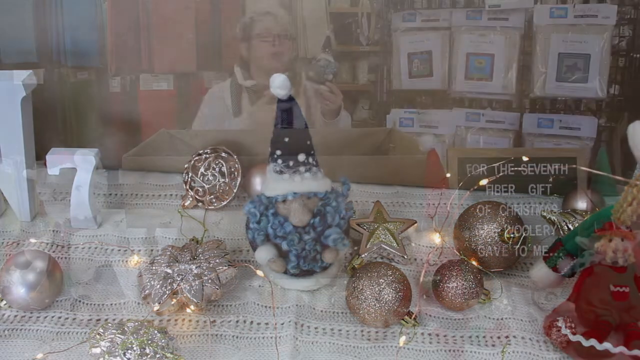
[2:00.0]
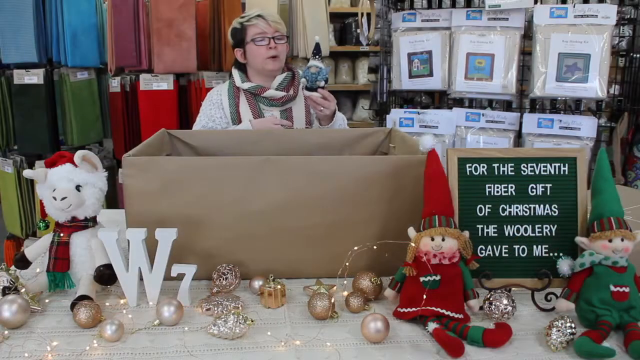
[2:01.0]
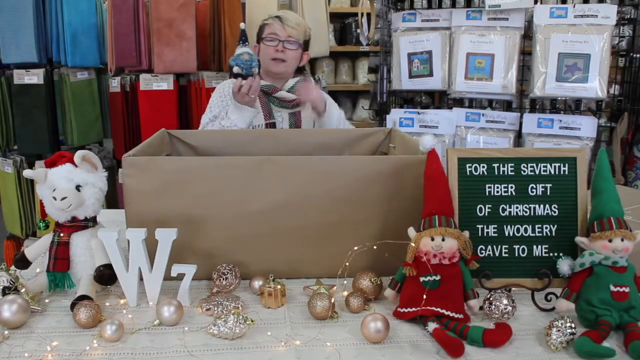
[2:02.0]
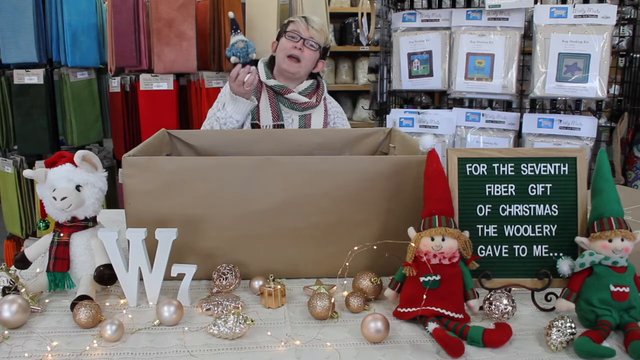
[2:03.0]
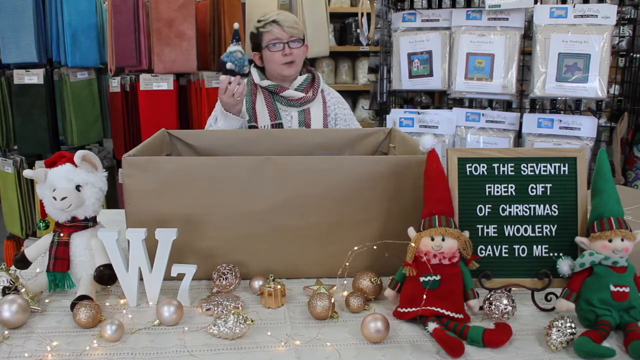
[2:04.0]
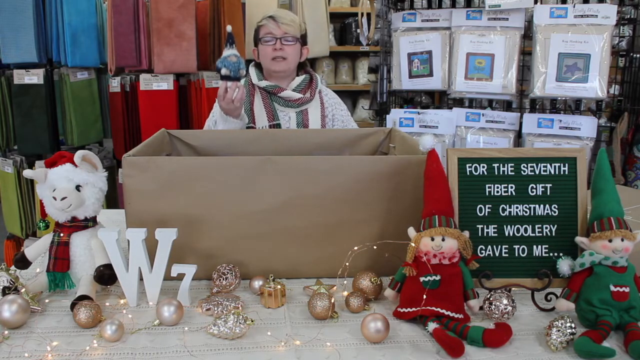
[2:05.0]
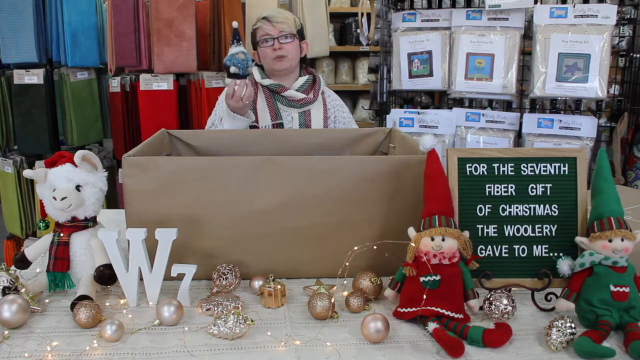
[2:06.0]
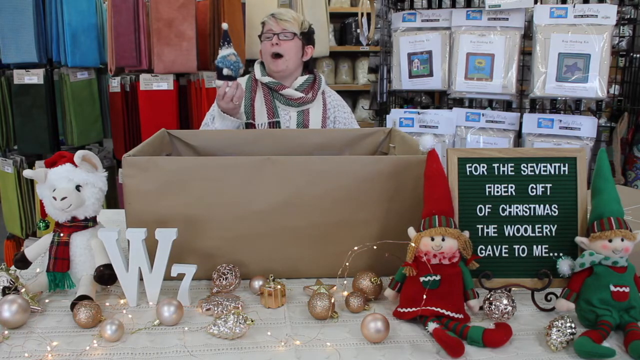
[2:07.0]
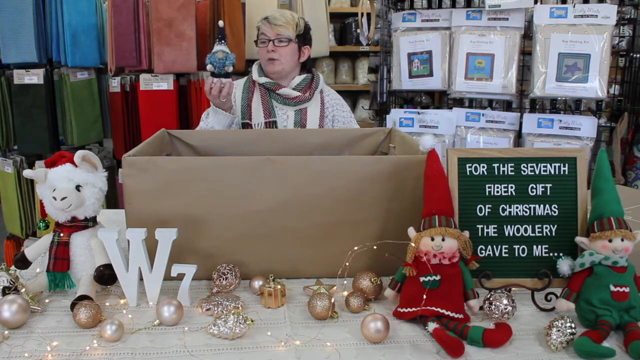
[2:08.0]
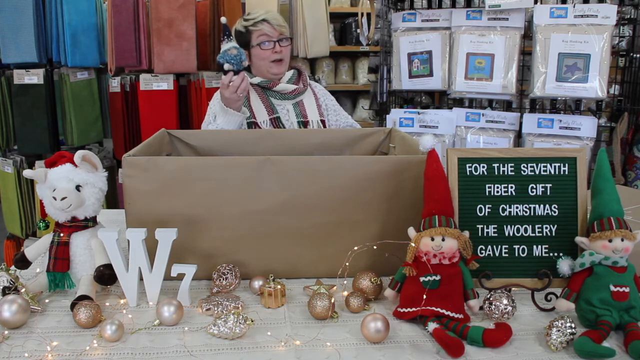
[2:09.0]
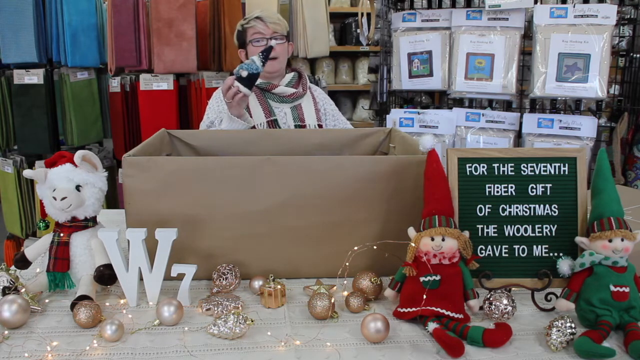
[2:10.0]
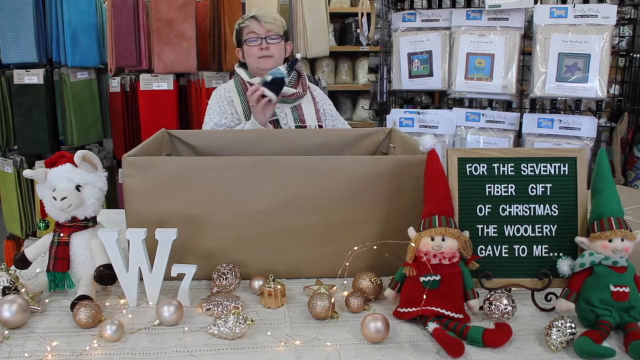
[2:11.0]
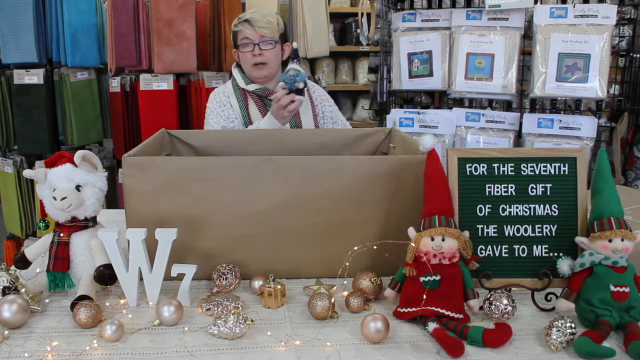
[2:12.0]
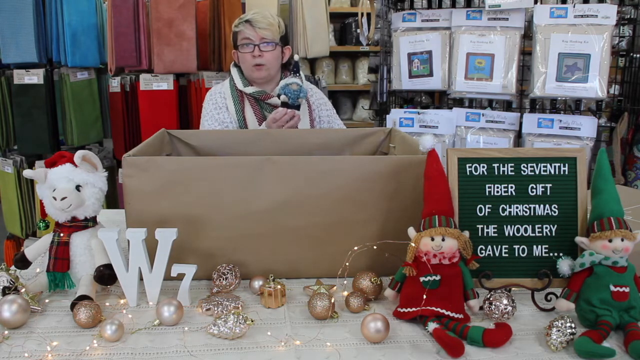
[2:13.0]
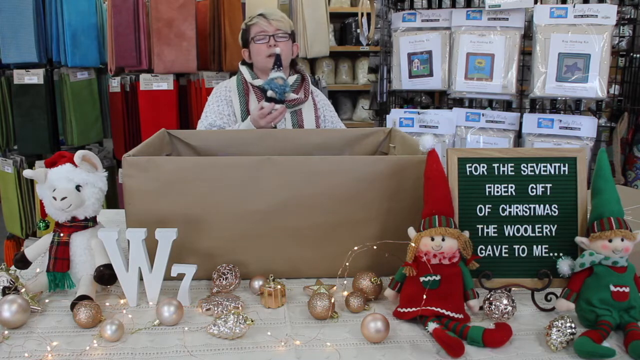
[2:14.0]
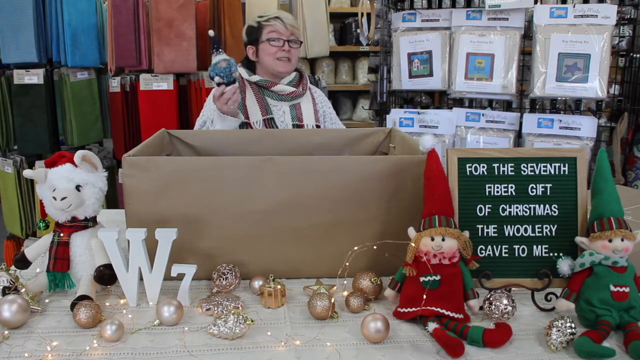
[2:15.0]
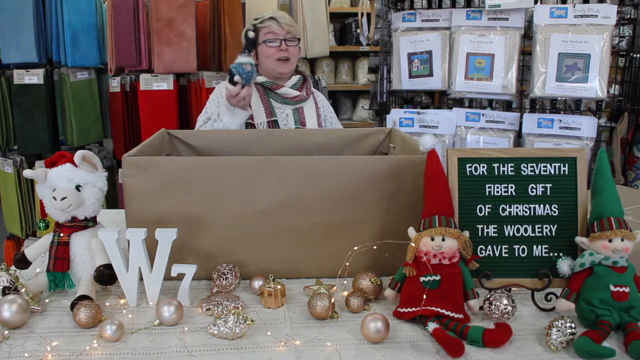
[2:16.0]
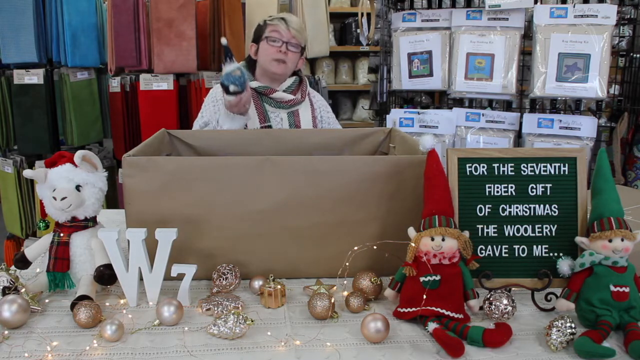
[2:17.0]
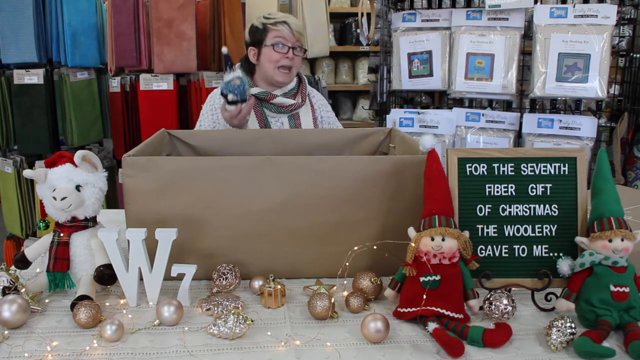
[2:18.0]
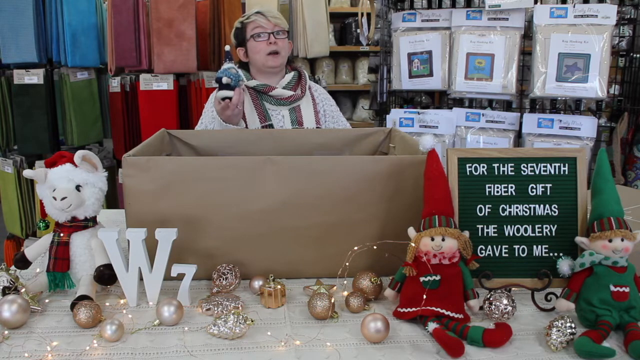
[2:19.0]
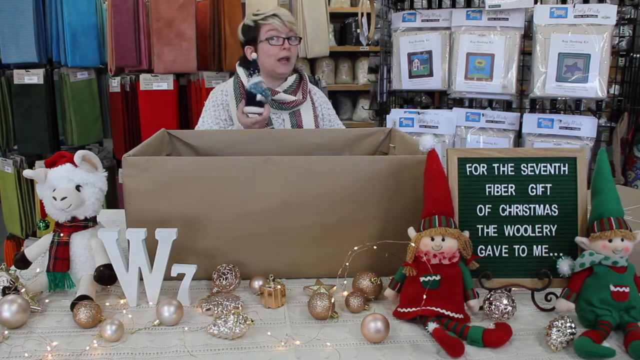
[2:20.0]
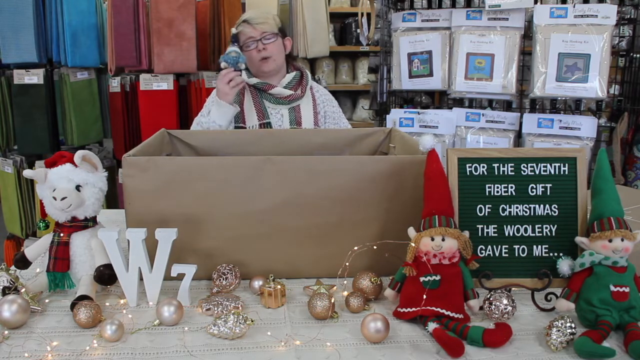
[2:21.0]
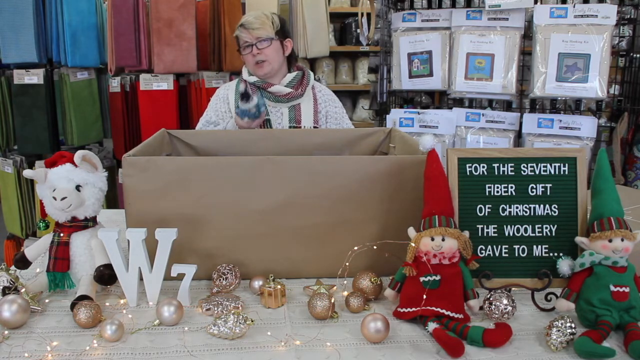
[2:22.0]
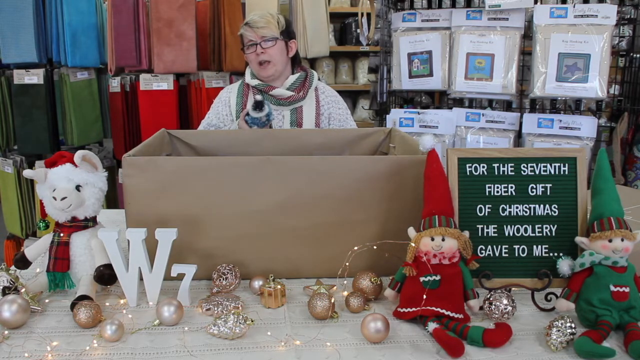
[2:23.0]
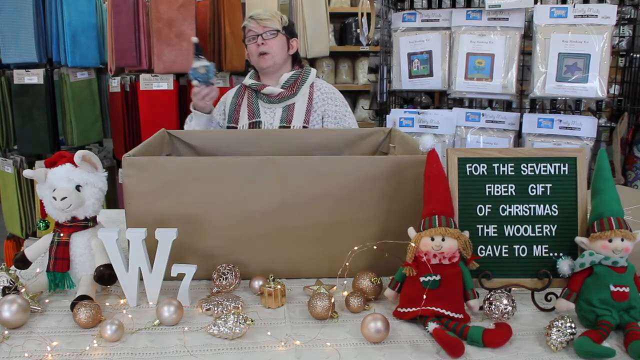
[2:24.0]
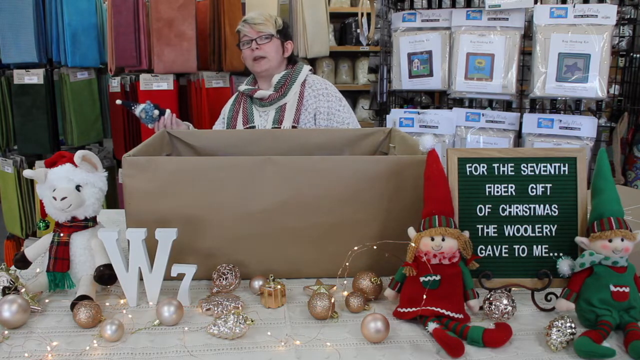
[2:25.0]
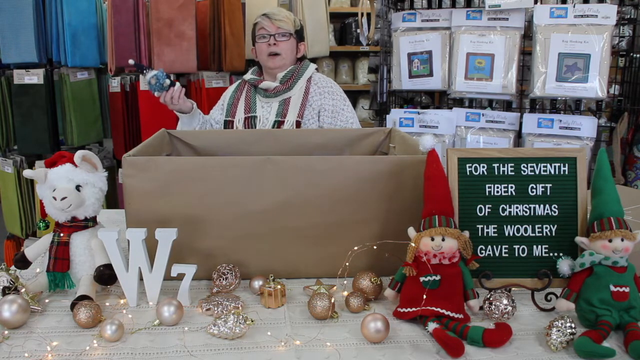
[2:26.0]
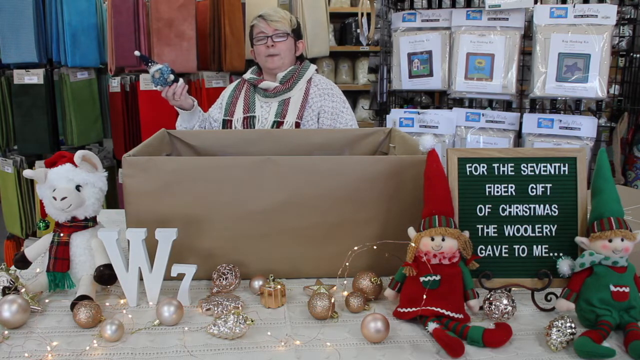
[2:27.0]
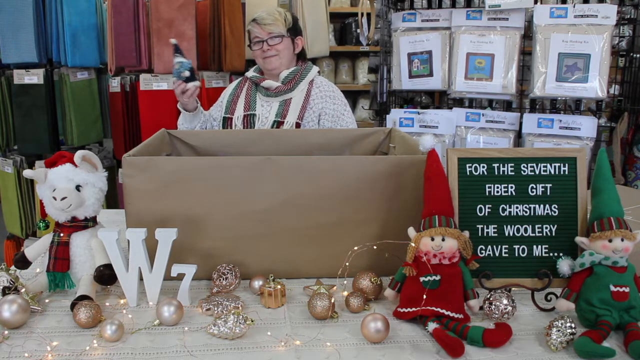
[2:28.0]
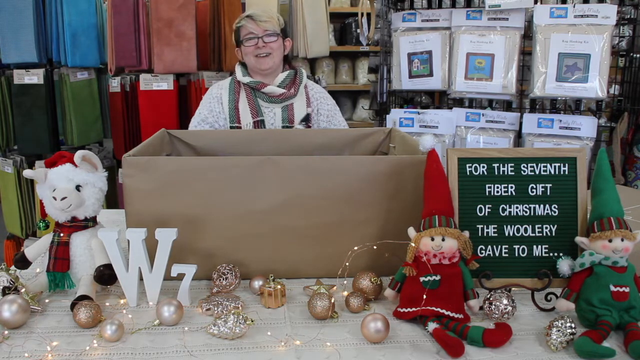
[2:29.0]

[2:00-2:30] A person stands behind a box, holding a small figure of an elf in a pointy hat with a blue beard. The person wears a white sweater and a scarf with white, green and red stripes, has short brown hair with blonde highlights, and wears glasses. In front of the box is a W and a 7. To the left of the box is a small white stuffed animal wearing a red hat and a red plaid scarf with green fringes at the end. To the right of the box is a signboard with the message "For the seventh fiber gift of Christmas, the Woolery gave to me." On either side of the signboard is a small plush stuffed elf toy, larger than the elf figure the person is holding. The person continues to hold the elf figure in their hand, moving it up and down, and looks at the audience, moving animatedly as they speak.